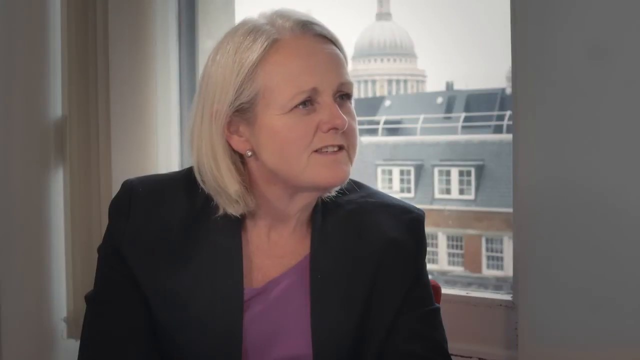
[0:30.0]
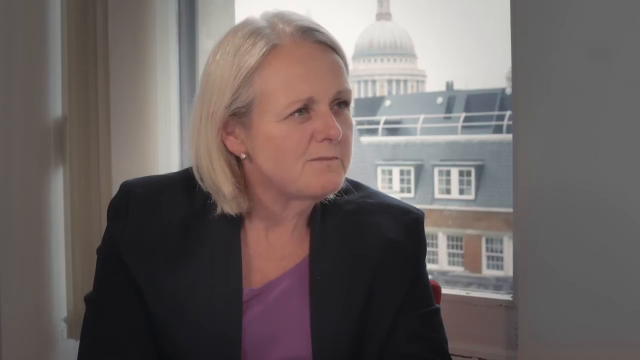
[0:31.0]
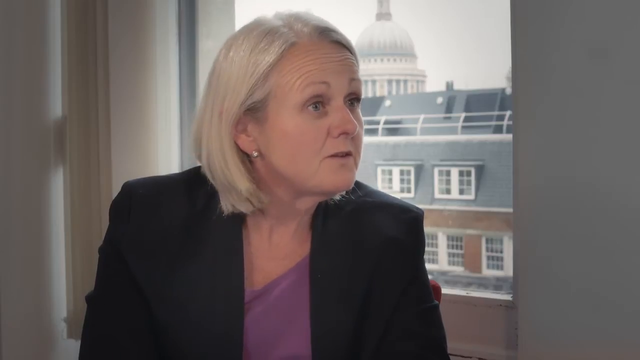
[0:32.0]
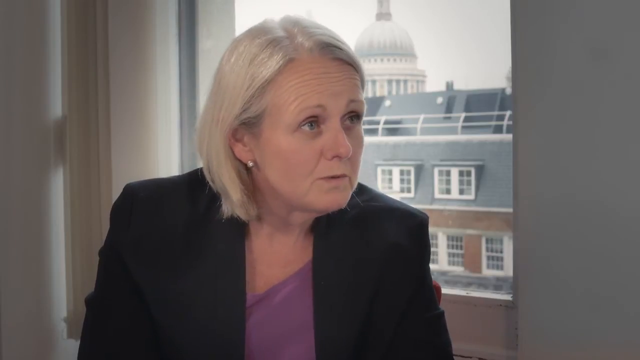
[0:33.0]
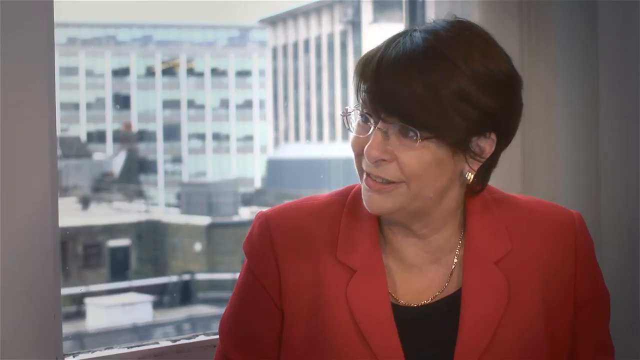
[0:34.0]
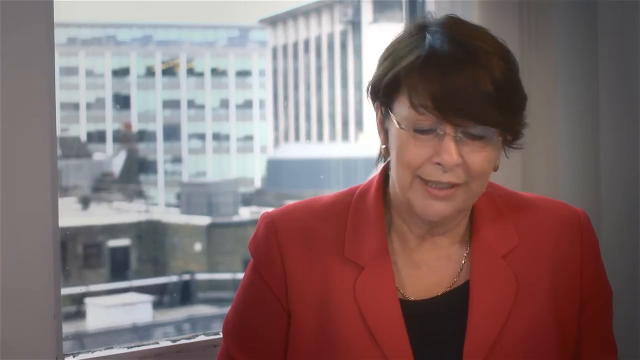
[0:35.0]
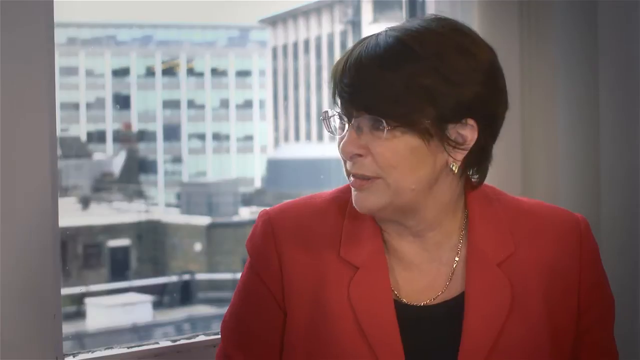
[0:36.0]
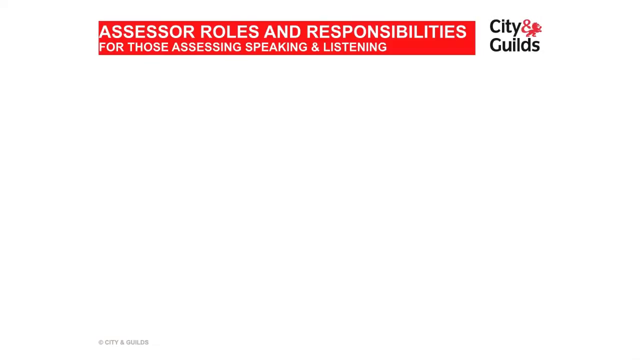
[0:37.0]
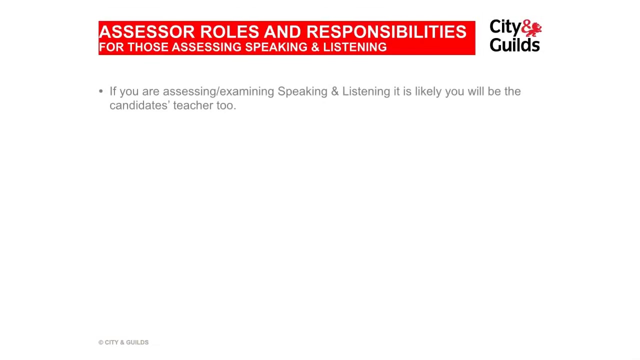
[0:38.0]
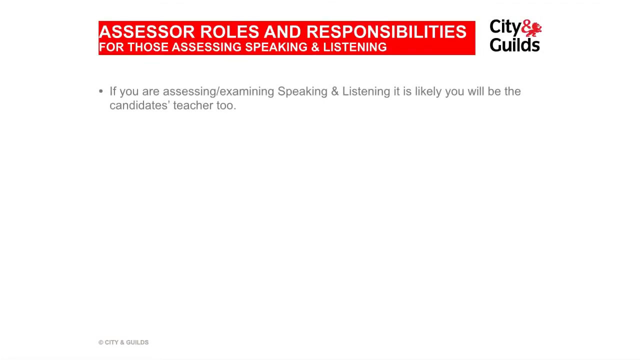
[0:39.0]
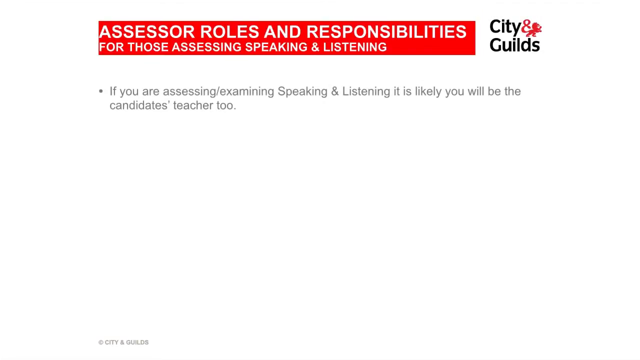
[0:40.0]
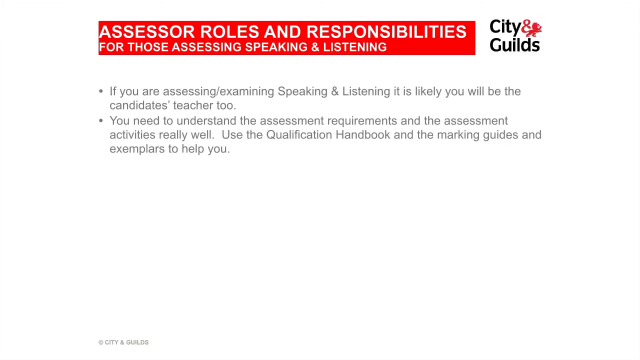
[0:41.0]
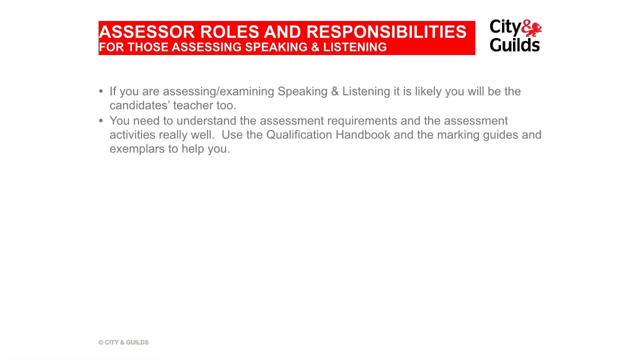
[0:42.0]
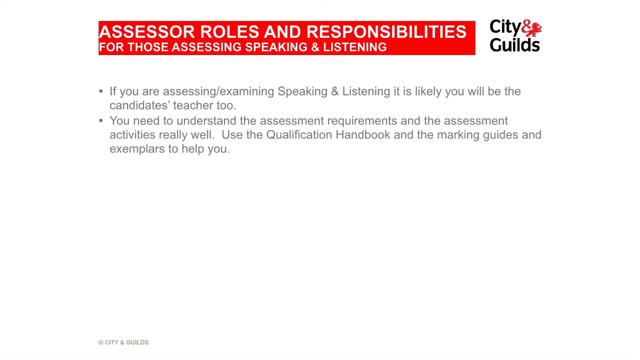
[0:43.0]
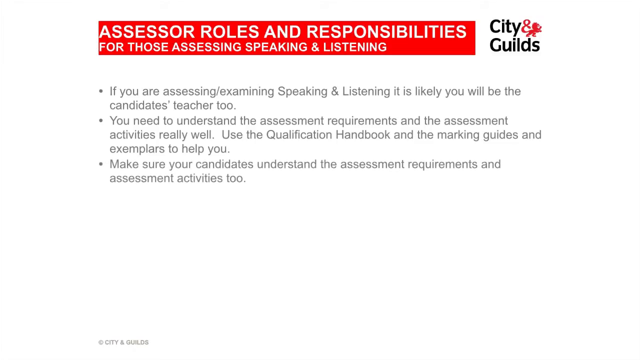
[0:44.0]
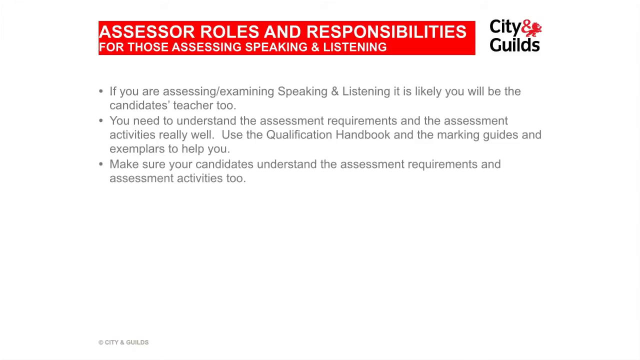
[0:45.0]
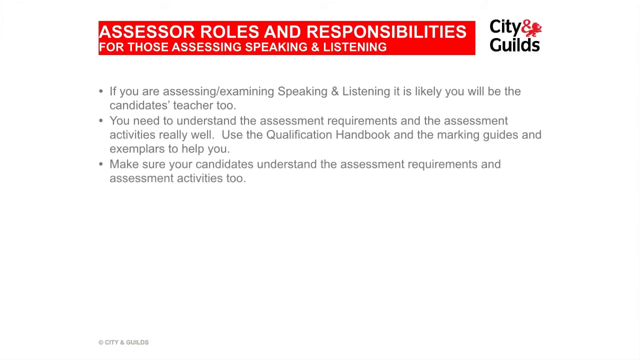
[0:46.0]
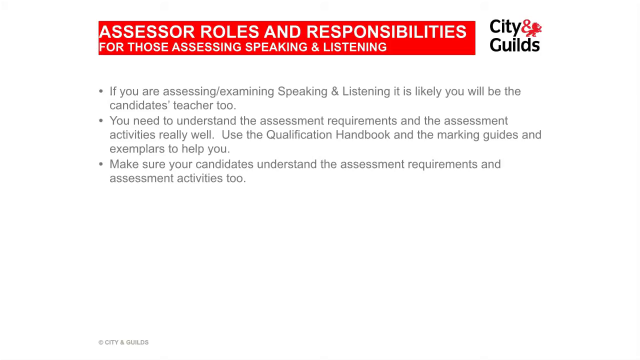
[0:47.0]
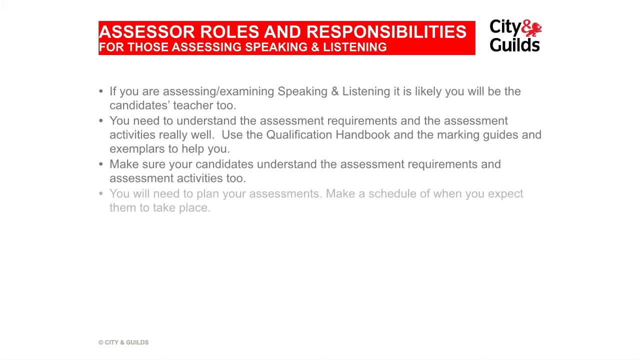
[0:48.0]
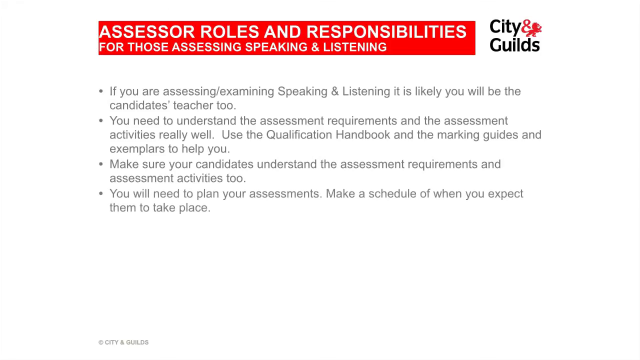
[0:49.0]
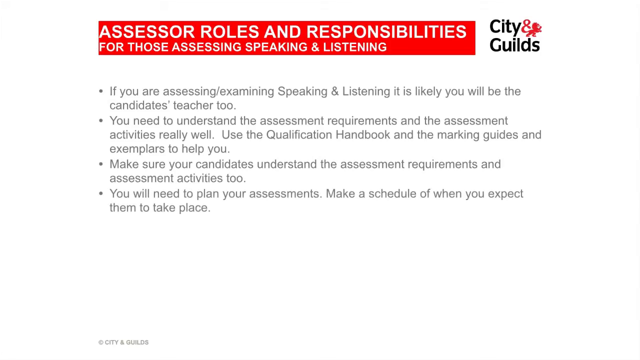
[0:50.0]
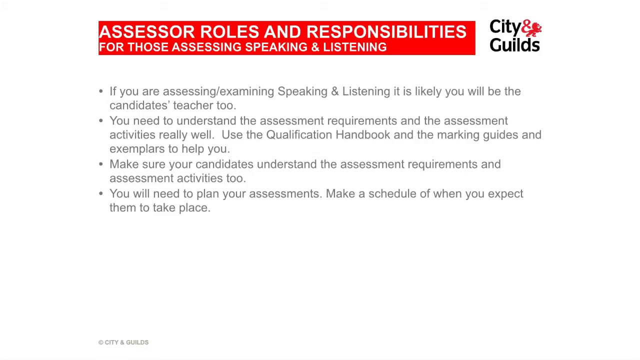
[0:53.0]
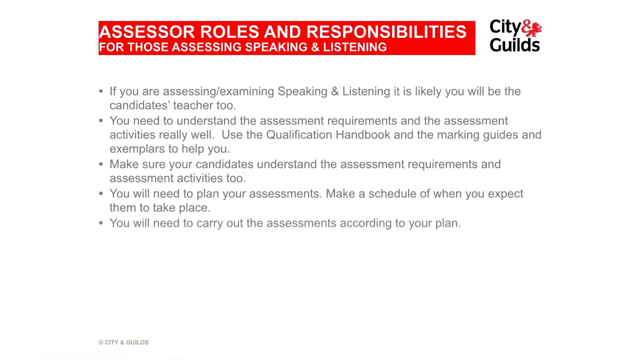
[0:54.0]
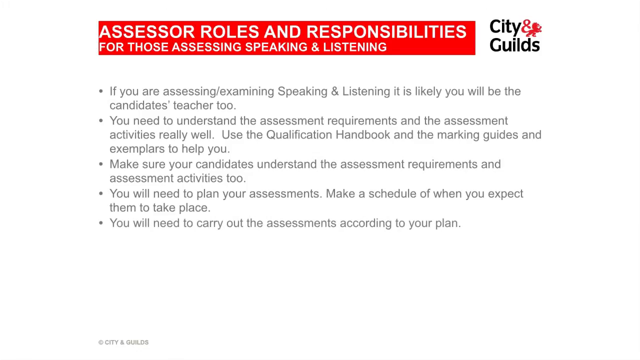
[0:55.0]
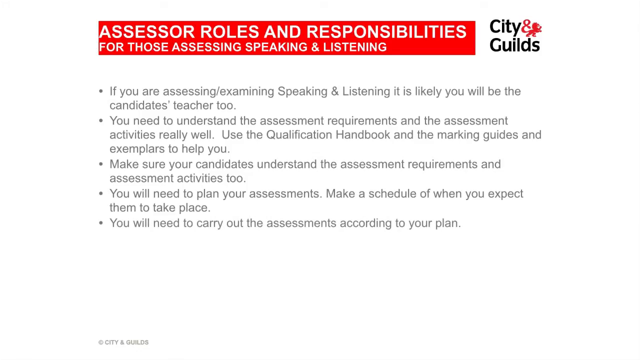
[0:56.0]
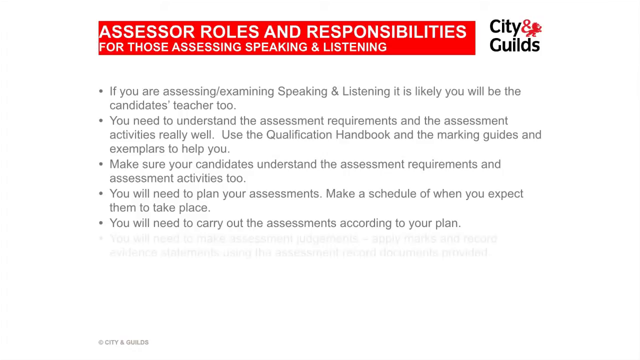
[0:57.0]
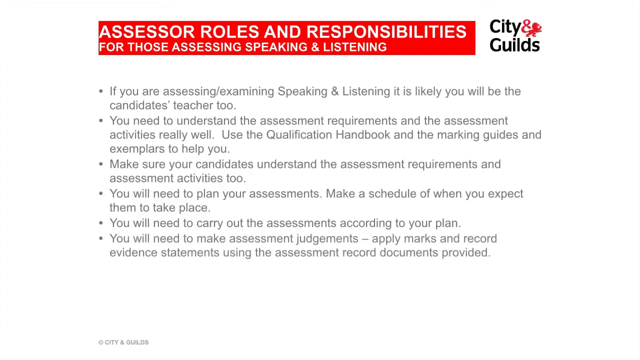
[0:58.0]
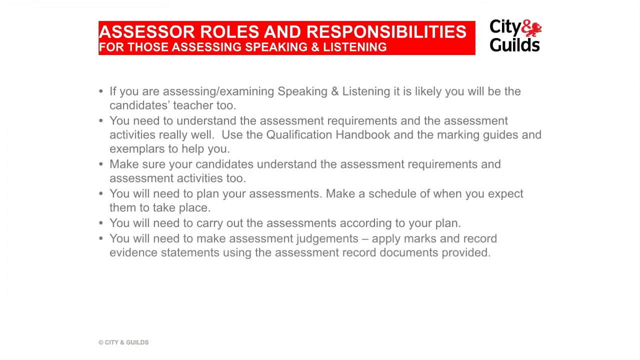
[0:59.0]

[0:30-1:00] A woman talks to someone to her left, with the camera focused on her. She wears a black blazer with a purple shirt underneath, has short blonde hair and earrings, and is sitting in front of a window through which a kind of government-looking building is visible in the distance. The camera then focuses on the woman she is talking to, who wears a red blazer over a black shirt, a golden necklace and glasses, and has short brown hair. She is also sitting in front of a window, but hers shows more of an industrial background. The video then cuts to a white background with a red box at the top containing white letters that read "assessor roles and responsibilities for those assessing, speaking, and listening."